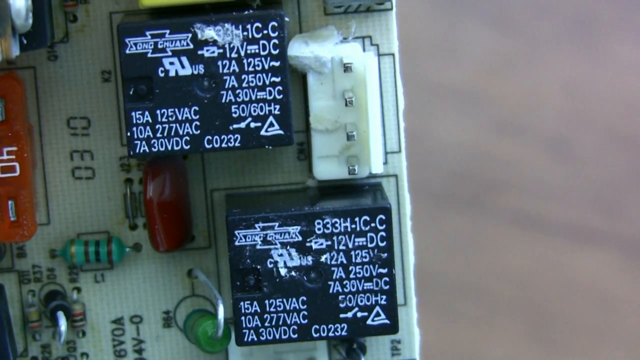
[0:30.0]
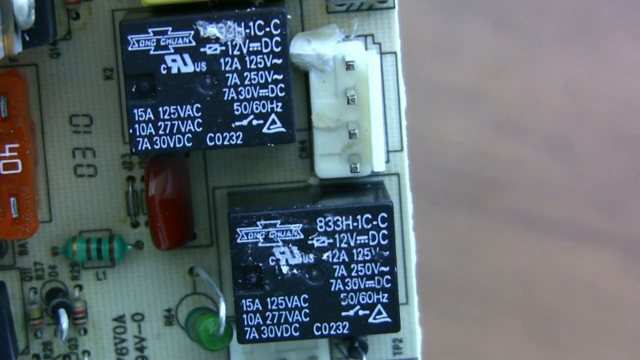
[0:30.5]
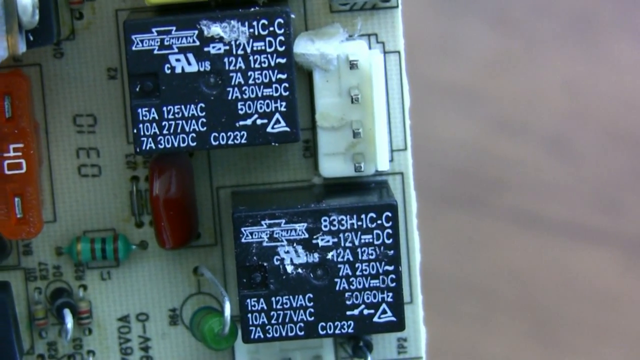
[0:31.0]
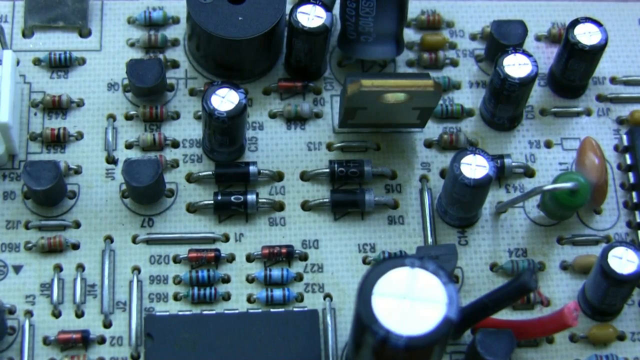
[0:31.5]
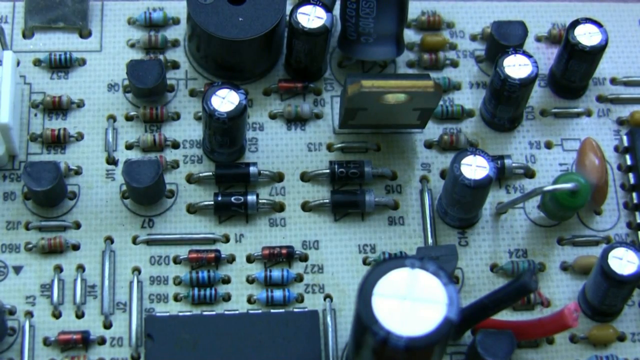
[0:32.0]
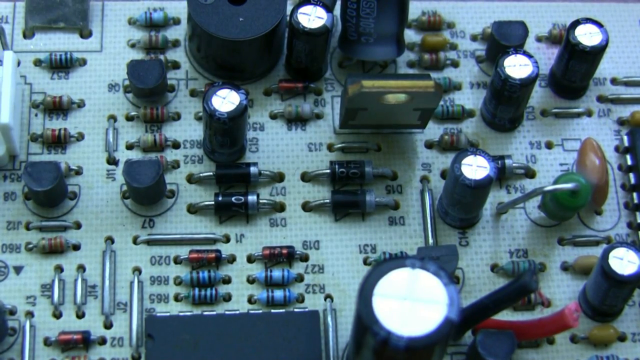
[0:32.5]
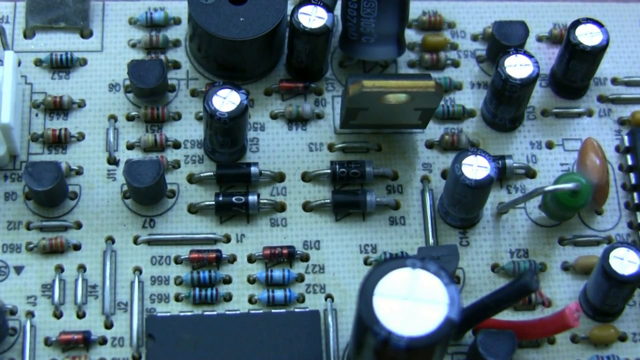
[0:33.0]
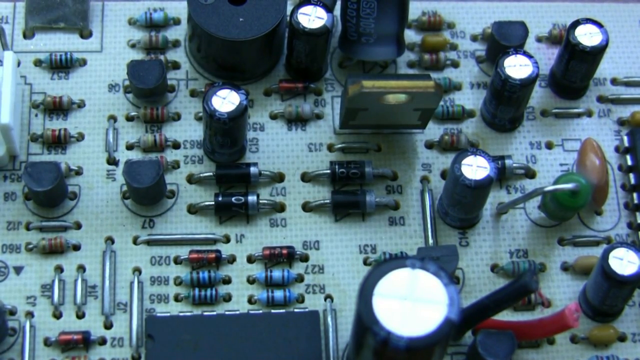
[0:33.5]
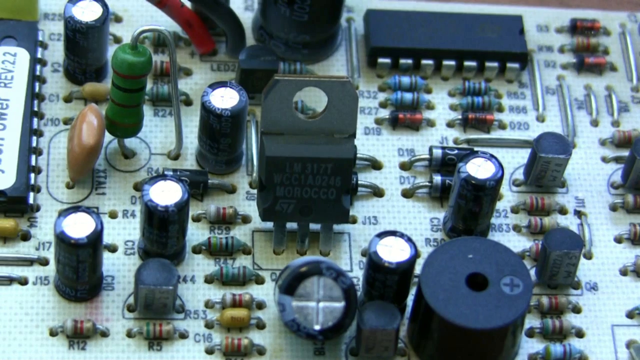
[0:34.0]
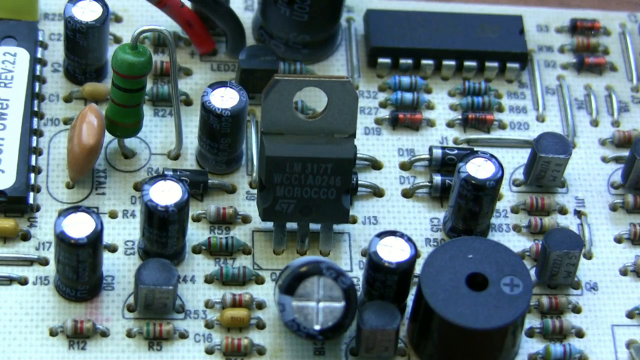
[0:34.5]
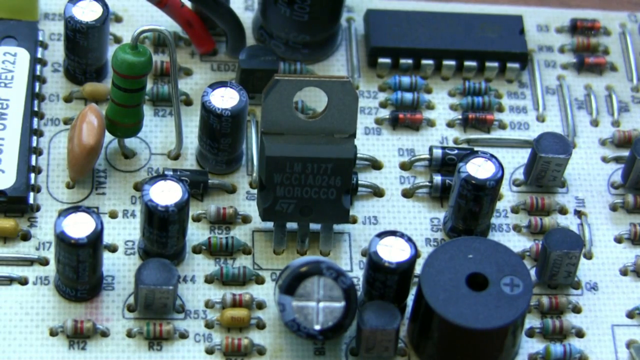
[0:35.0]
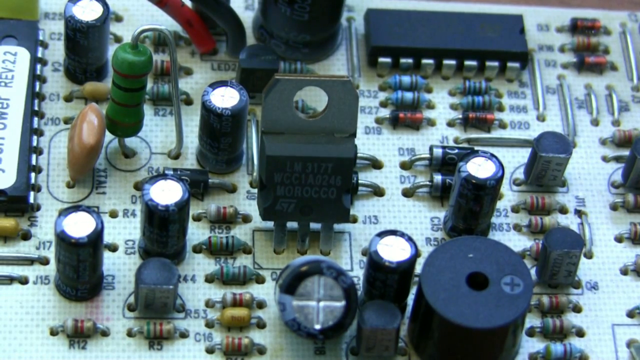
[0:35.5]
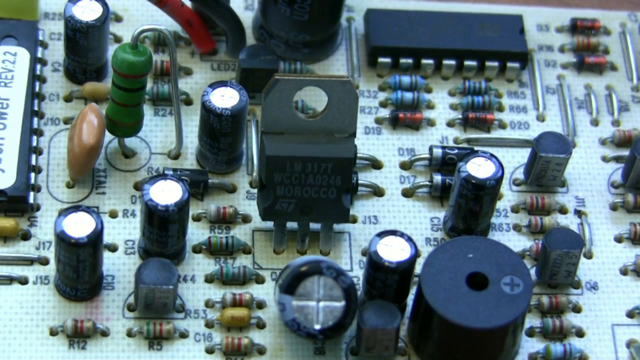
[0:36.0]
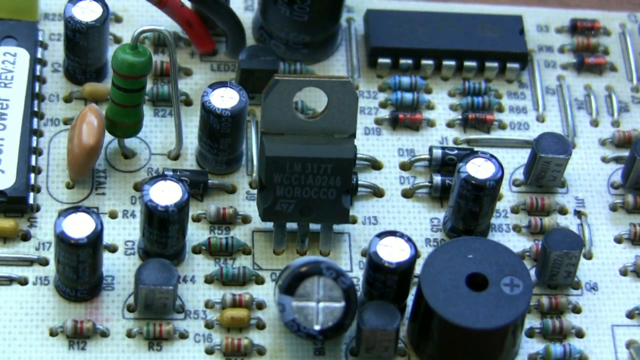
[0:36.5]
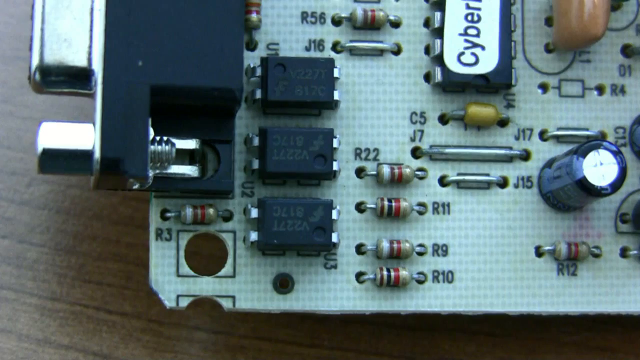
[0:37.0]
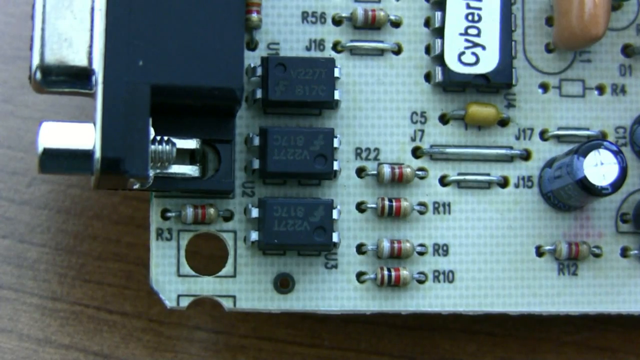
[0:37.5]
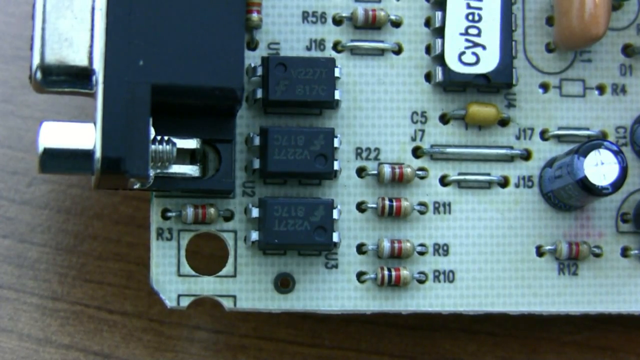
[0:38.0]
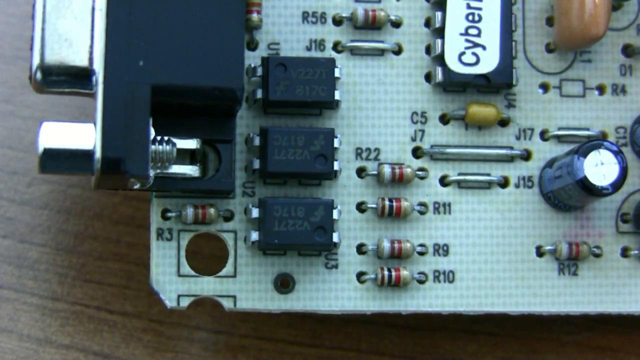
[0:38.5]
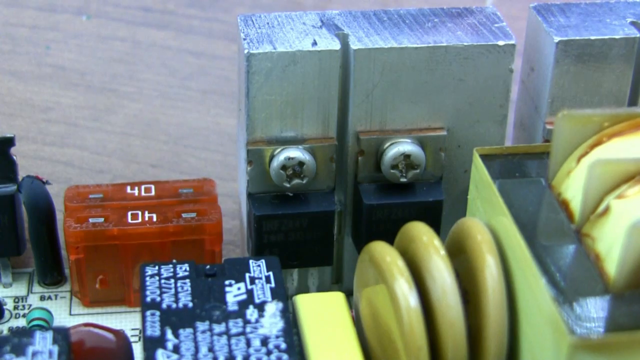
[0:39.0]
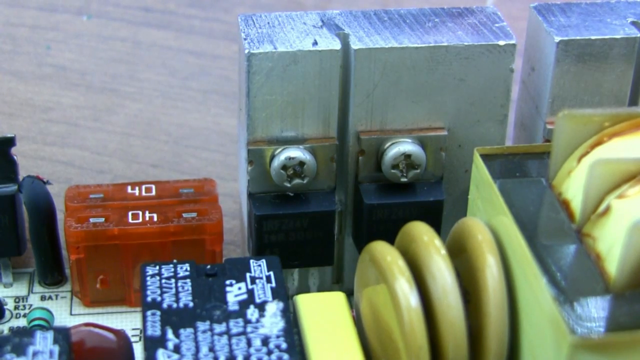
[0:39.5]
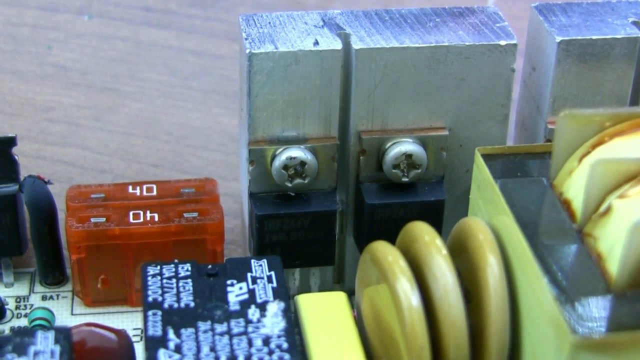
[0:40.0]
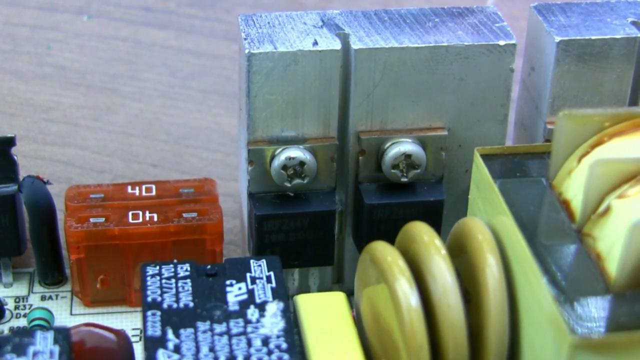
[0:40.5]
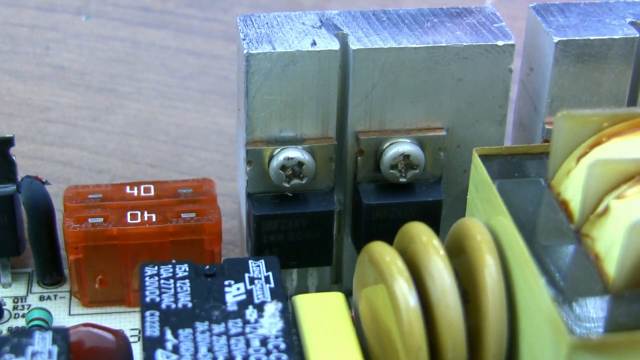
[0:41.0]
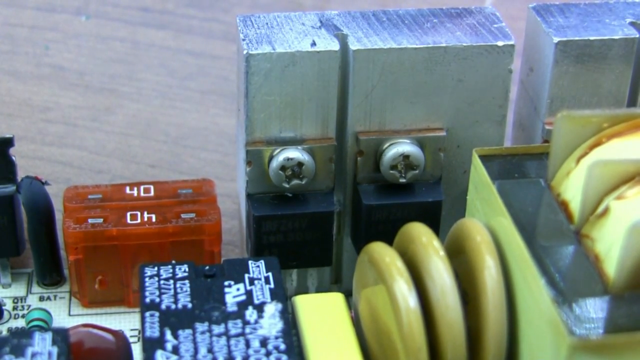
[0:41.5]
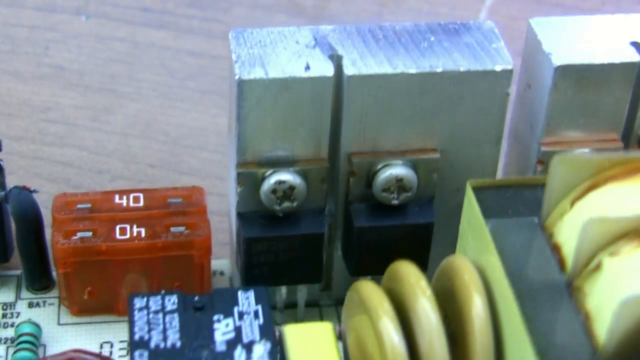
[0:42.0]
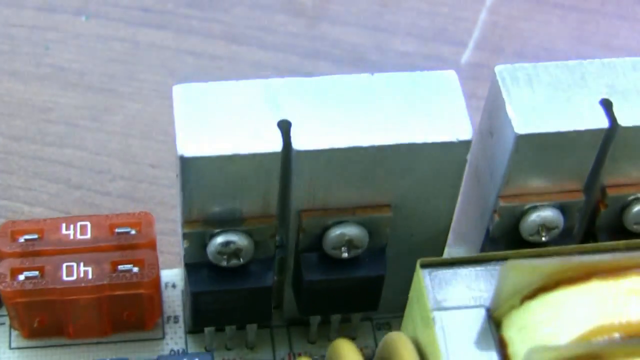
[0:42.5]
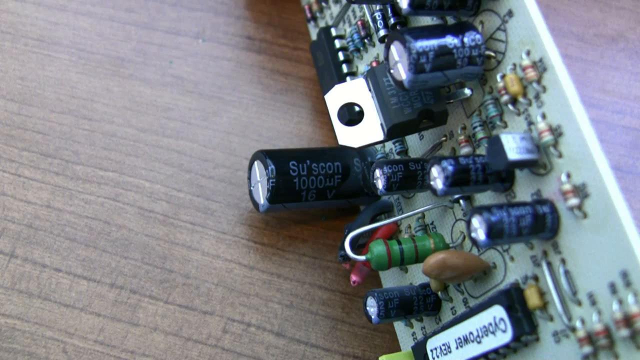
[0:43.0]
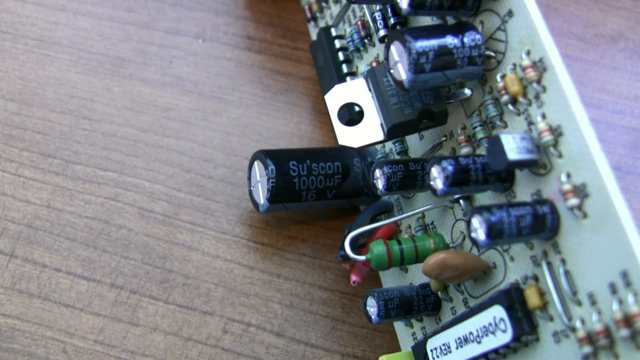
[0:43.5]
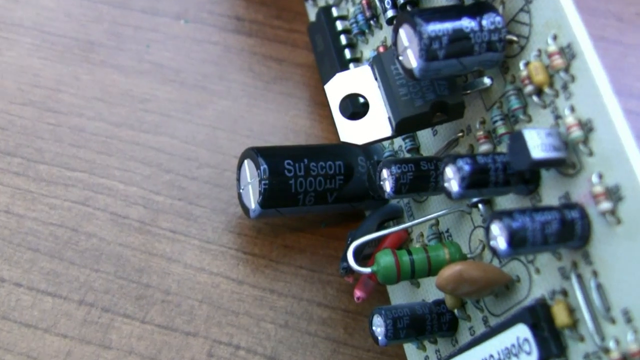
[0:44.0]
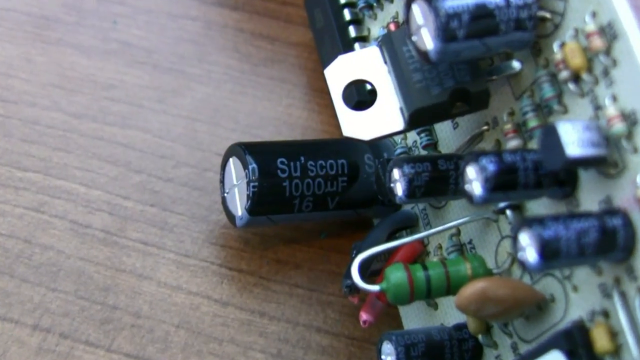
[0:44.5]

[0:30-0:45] A circuit board has five battery-looking pieces of equipment on it. A green piece of equipment is next to four blue pieces, two red pieces and four grouped small black insignia. Writing on the circuit board includes R31, R63, R52, J11, R56, R54 and B57. Another circuit board has three little rectangular pieces, and a piece of equipment says "cyber" on it. Smaller pieces of similar color are white with red and black banding. Another piece of equipment has writing, some of it repeating: R9, R10, R11, J15, J7, J6, J5, C5. Something is screwed into what looks like a square box, and there is another screw. Two small orange plastic pieces have the number 40 on them. Three small discs look like pancakes, and to the right of them are two discs that look like bagels.